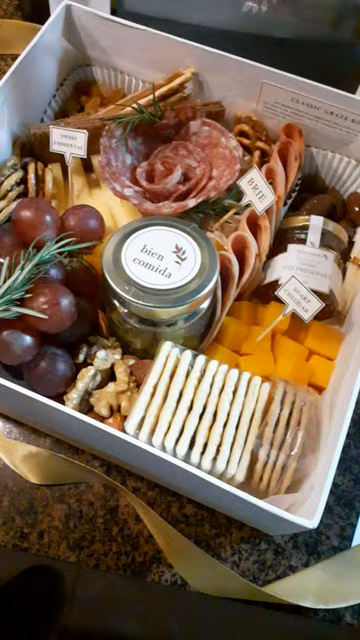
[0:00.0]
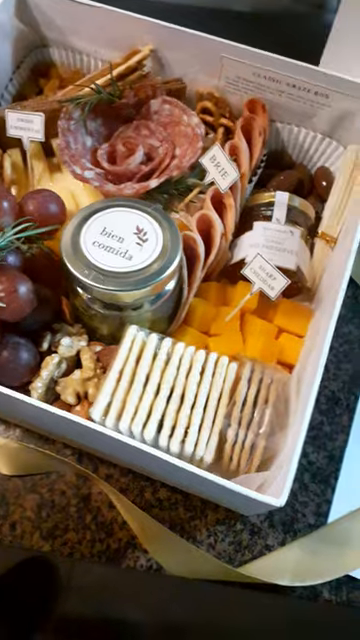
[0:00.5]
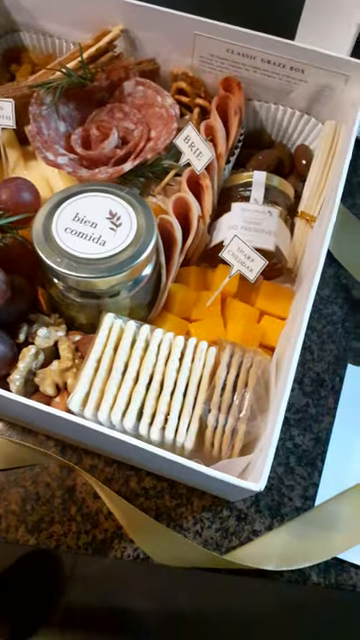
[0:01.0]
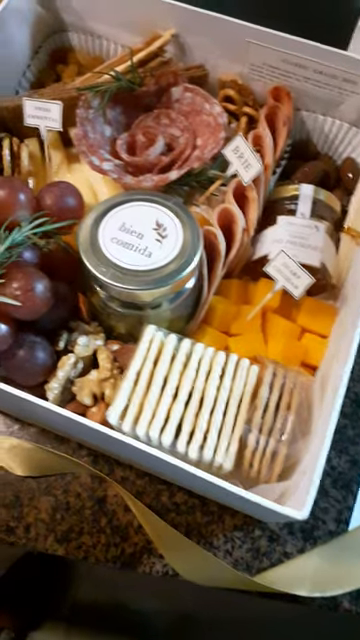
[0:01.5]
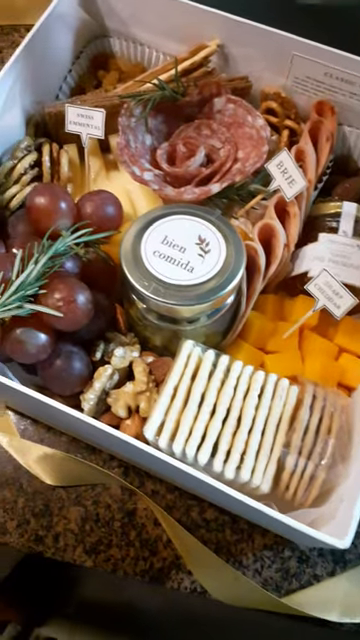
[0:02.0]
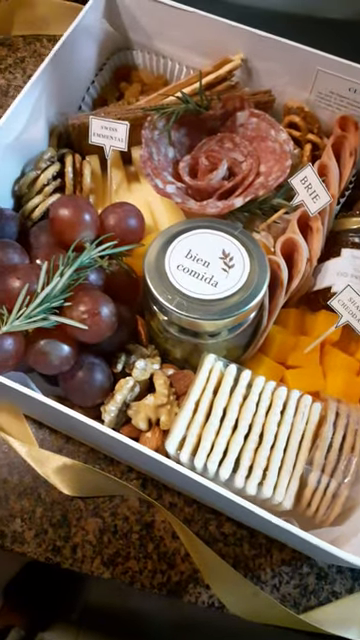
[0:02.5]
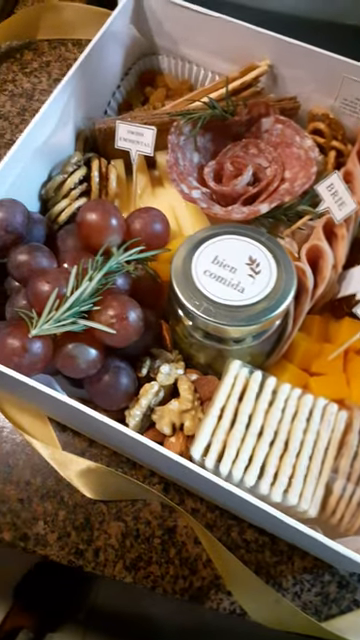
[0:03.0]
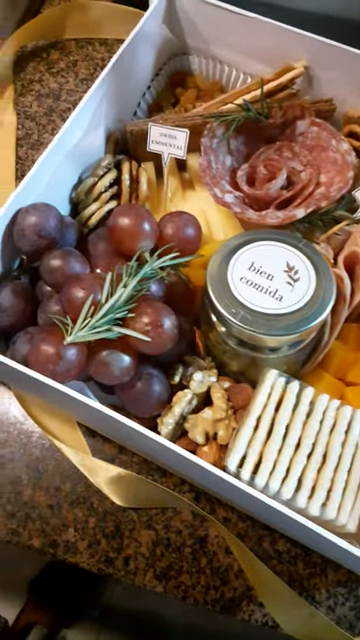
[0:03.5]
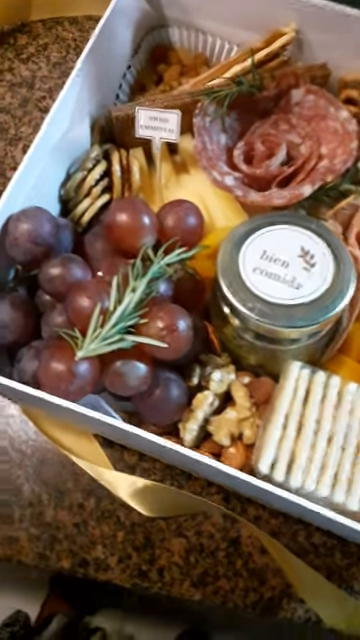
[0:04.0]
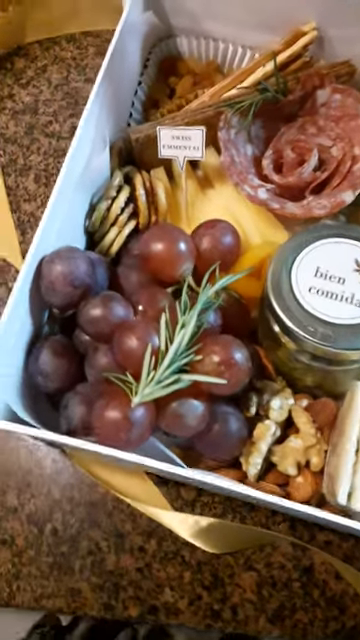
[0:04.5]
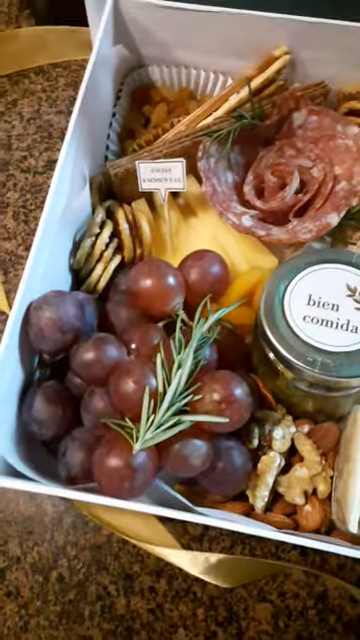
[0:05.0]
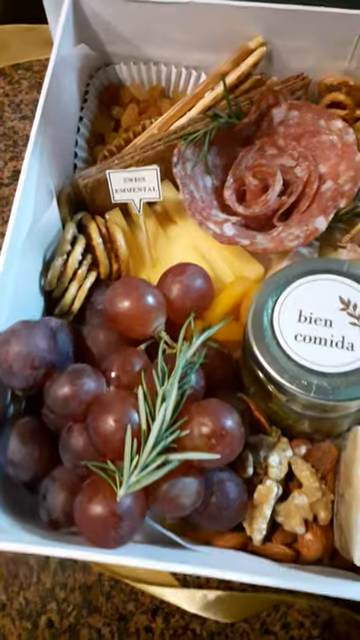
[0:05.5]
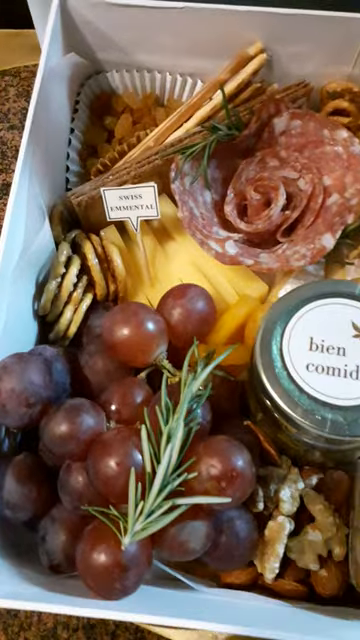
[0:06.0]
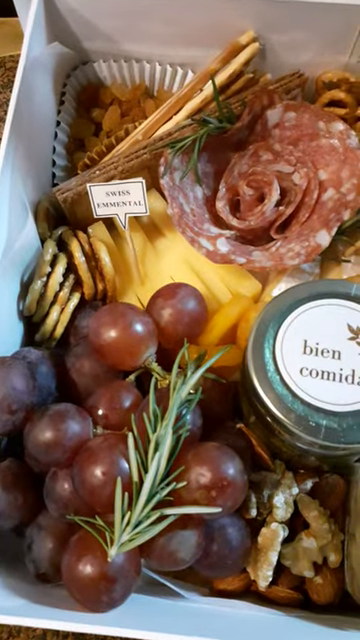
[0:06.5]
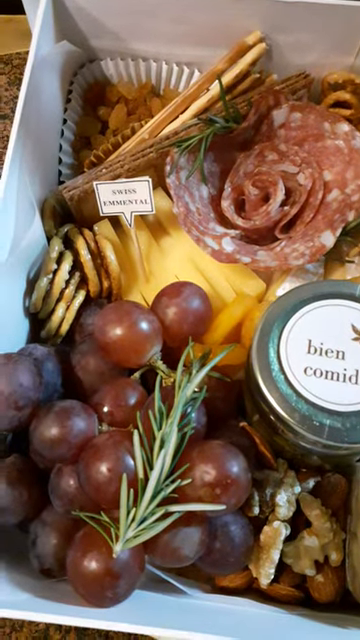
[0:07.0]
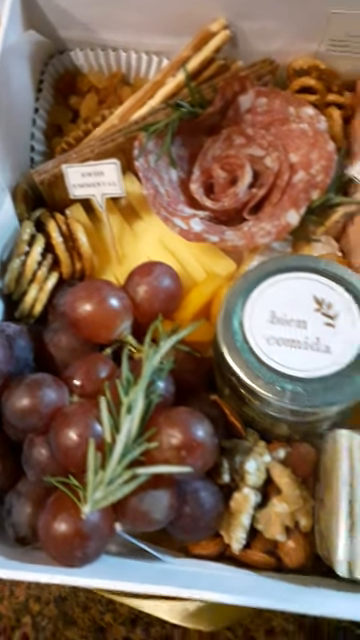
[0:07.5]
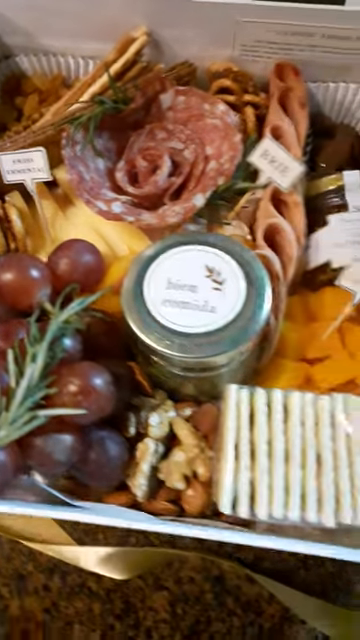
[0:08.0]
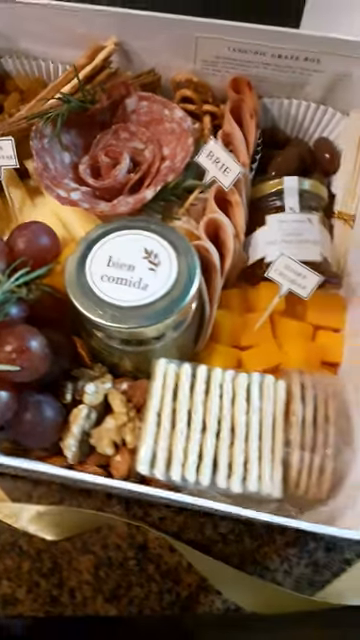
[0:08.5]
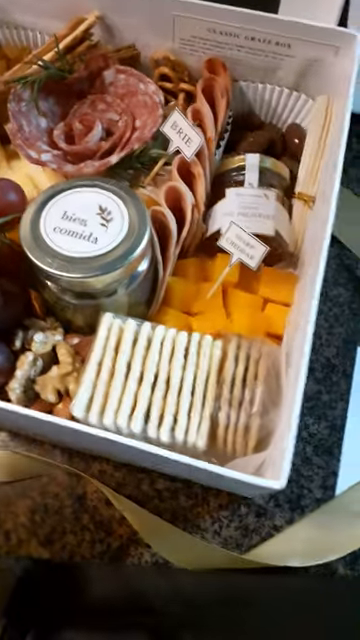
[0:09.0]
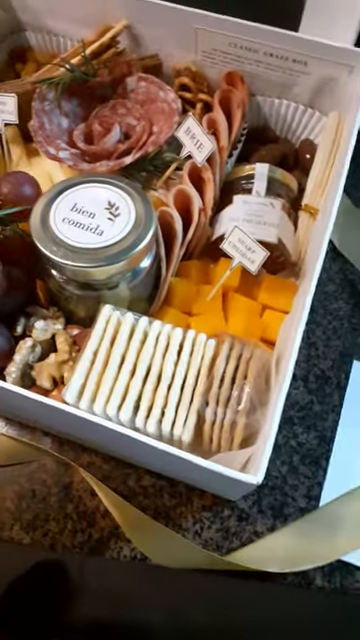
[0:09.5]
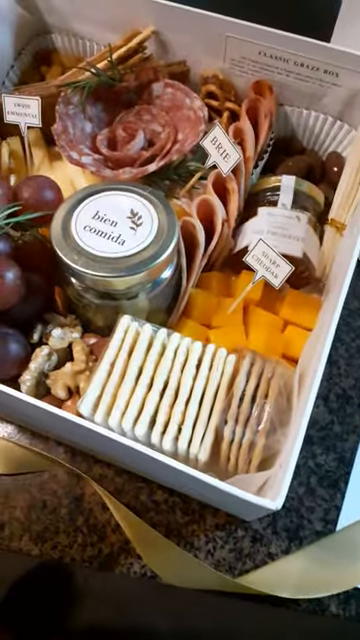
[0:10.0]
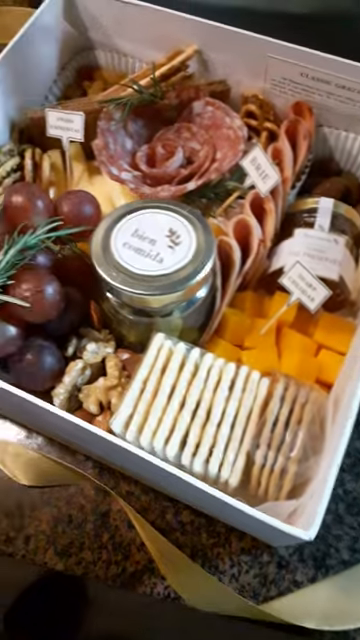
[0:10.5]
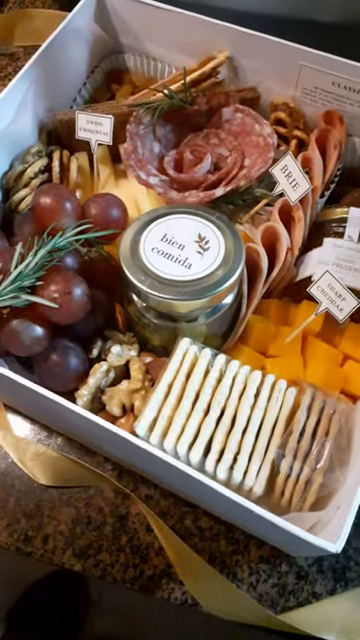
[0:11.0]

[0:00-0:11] Someone shows a charcuterie board in a box containing grapes and different pieces of salami. In the middle of the box is a jar labeled "Bien Comida." At the bottom right of the box are many crackers stacked on top of one another. Above the crackers are orange blocks of cheese, and next to the cheese are different slices of ham evenly placed on top of one another. The video then shows that there is brie cheese. All of these items are labeled with little sticks that have tags on them.